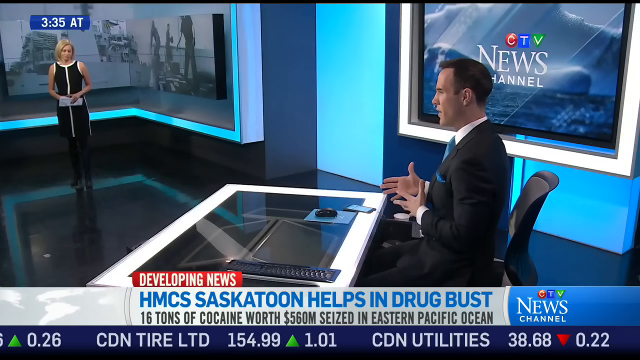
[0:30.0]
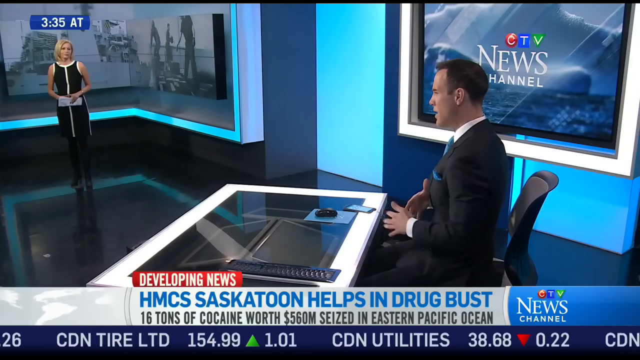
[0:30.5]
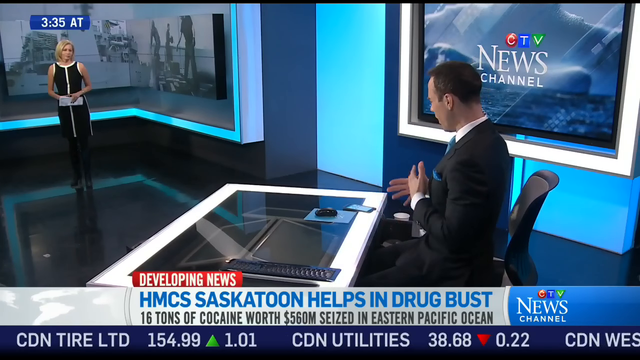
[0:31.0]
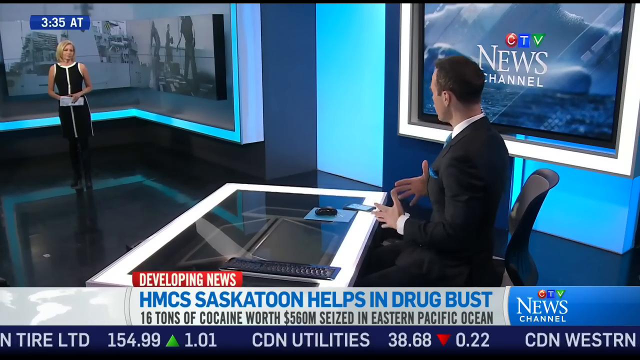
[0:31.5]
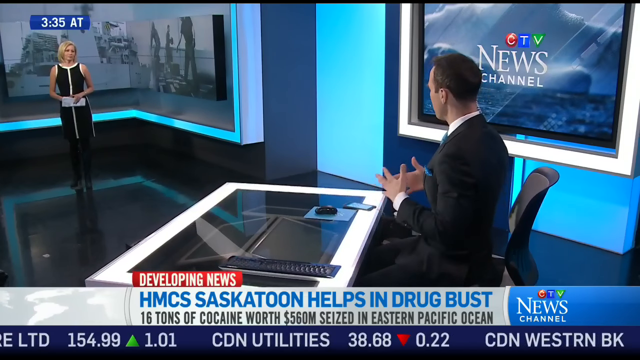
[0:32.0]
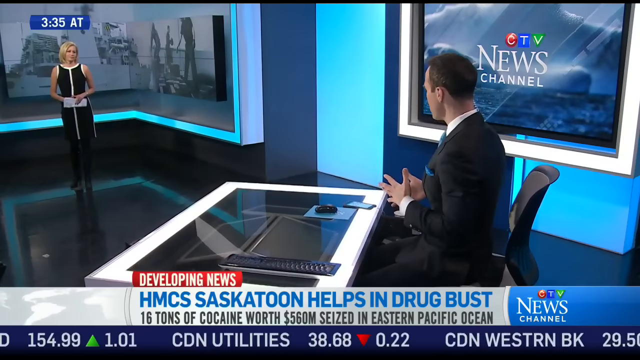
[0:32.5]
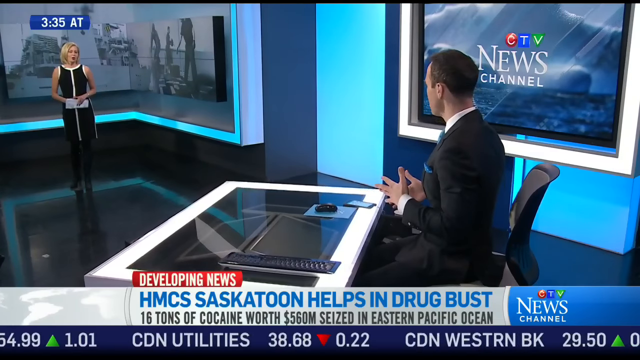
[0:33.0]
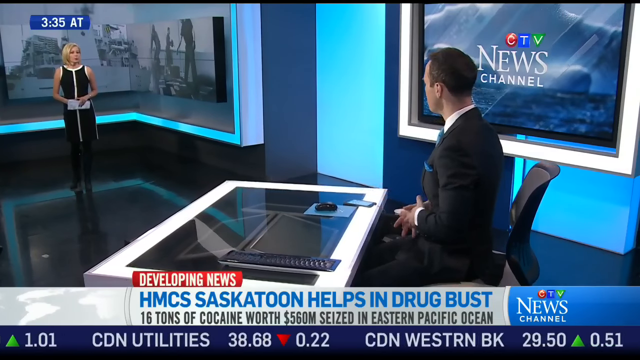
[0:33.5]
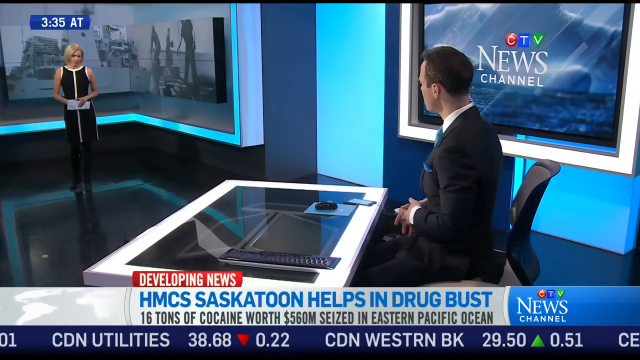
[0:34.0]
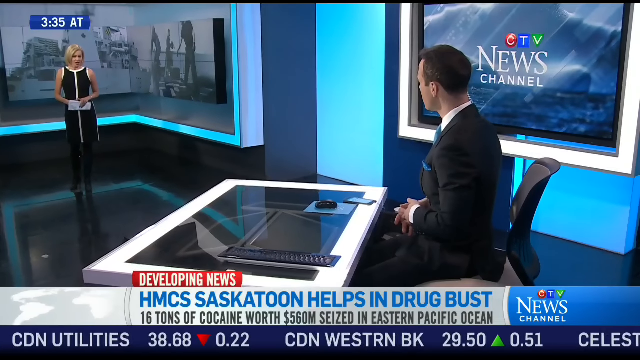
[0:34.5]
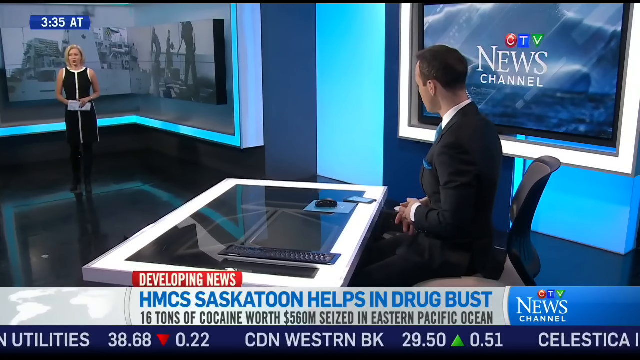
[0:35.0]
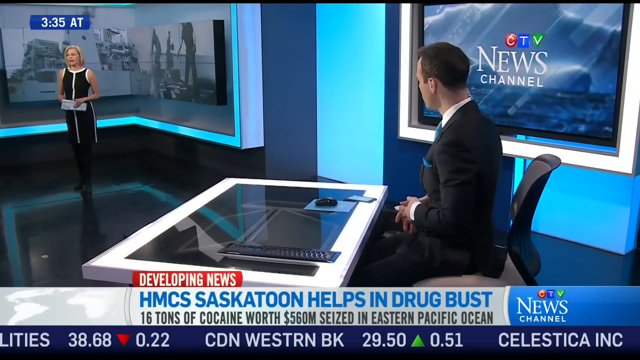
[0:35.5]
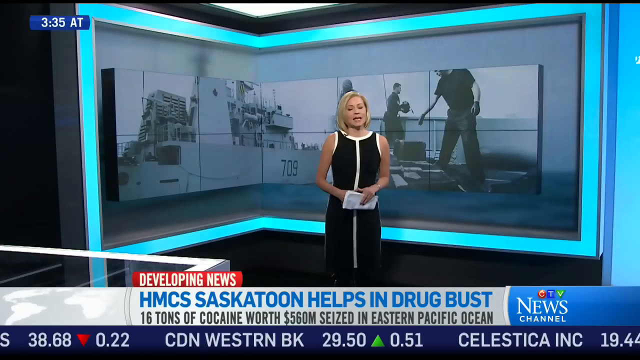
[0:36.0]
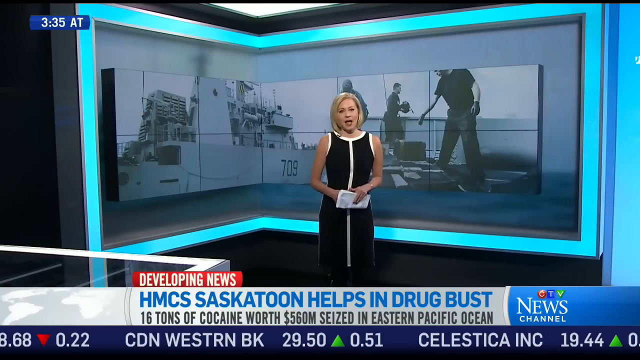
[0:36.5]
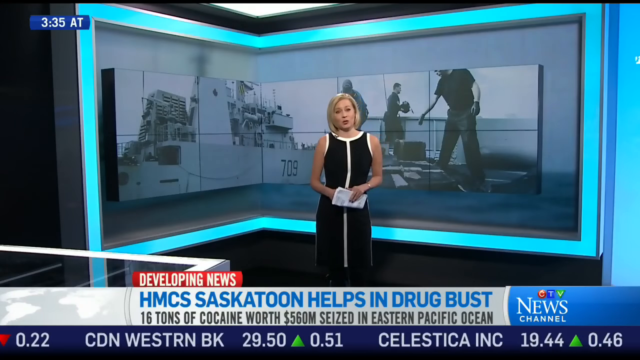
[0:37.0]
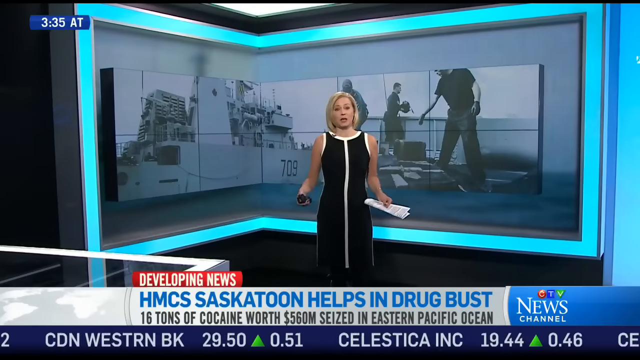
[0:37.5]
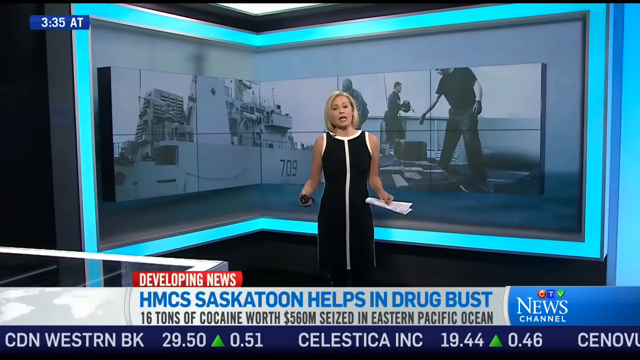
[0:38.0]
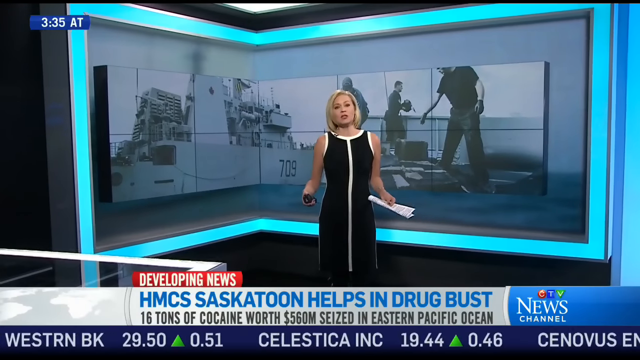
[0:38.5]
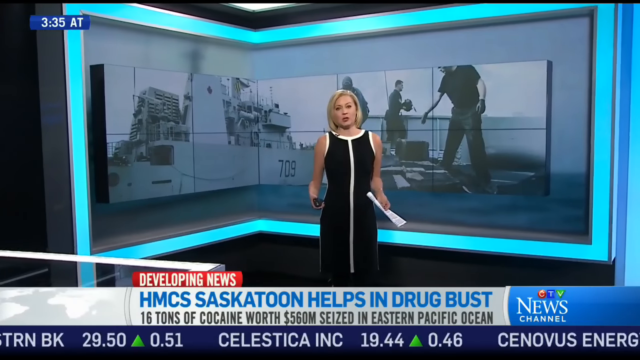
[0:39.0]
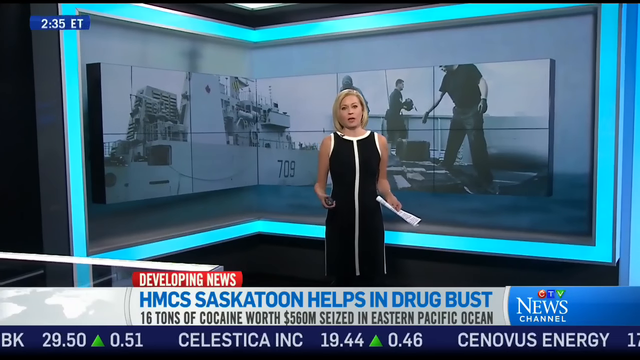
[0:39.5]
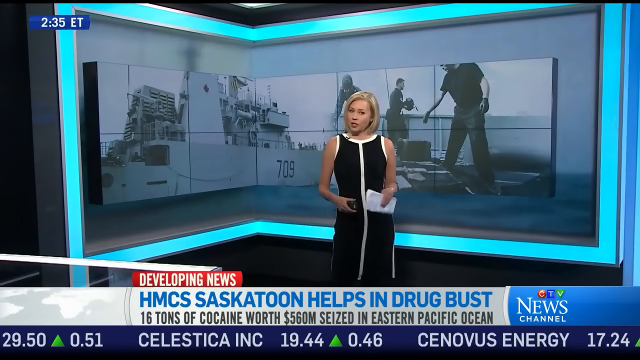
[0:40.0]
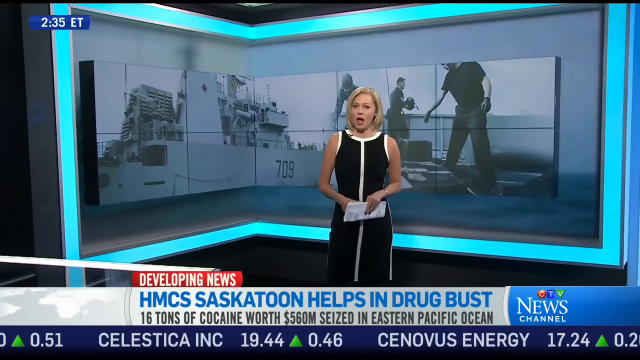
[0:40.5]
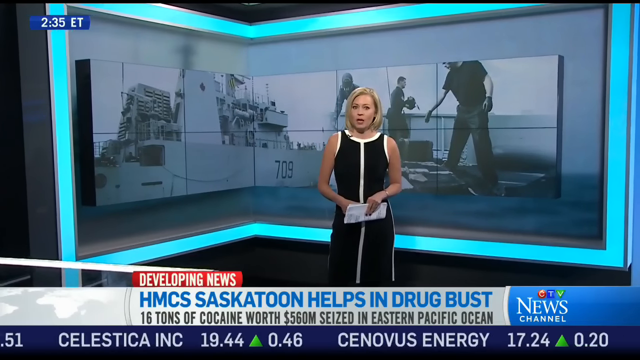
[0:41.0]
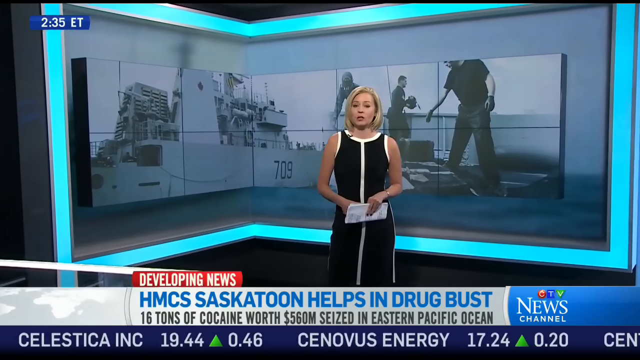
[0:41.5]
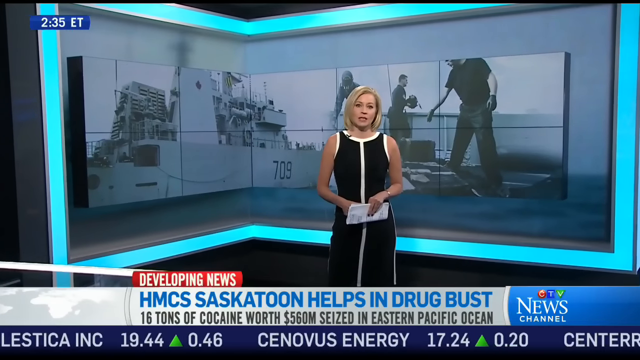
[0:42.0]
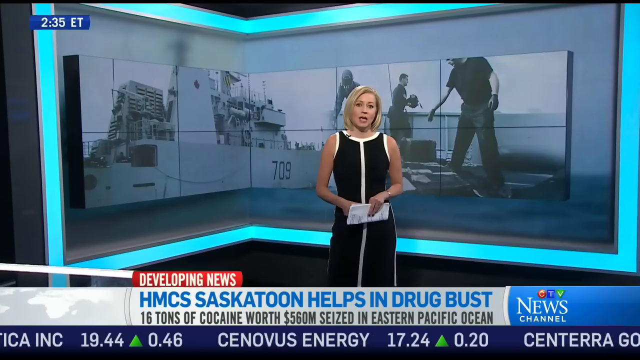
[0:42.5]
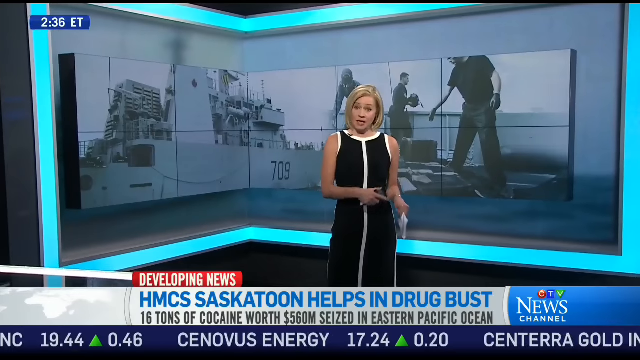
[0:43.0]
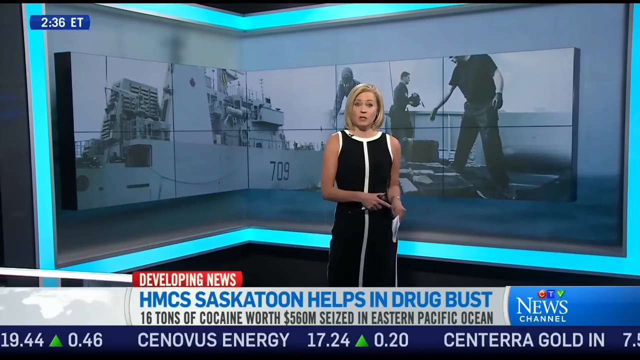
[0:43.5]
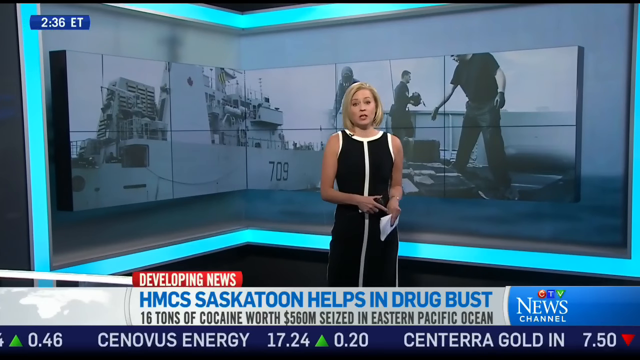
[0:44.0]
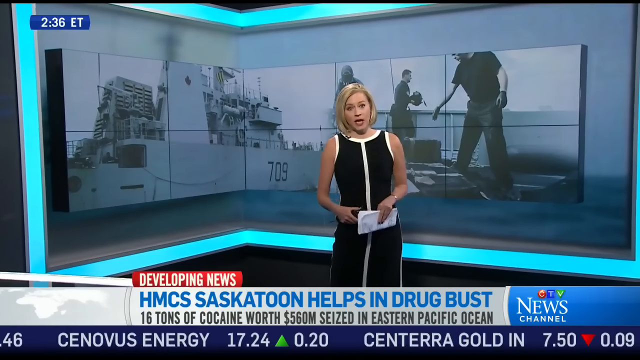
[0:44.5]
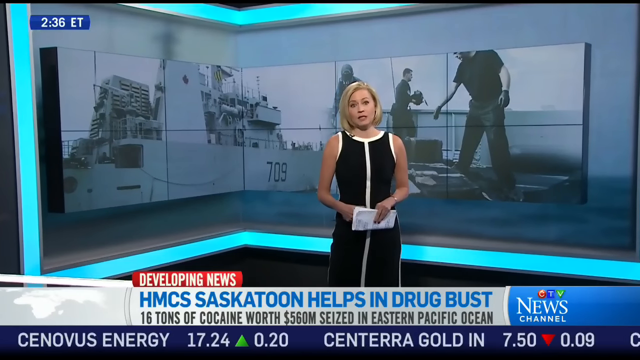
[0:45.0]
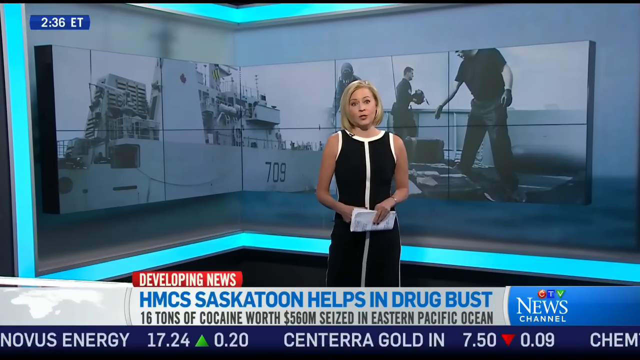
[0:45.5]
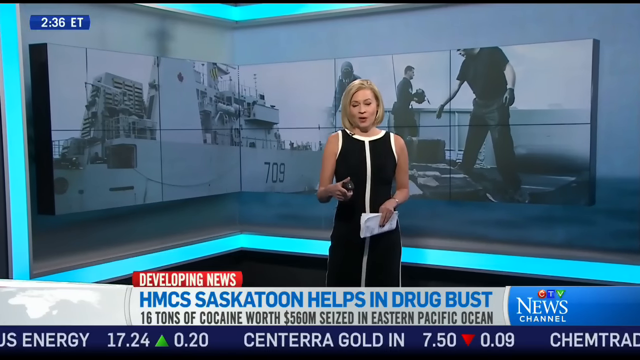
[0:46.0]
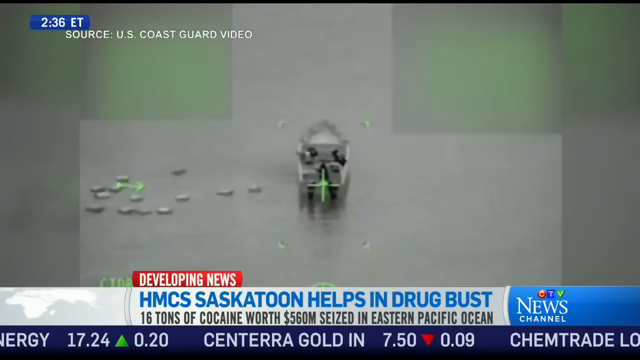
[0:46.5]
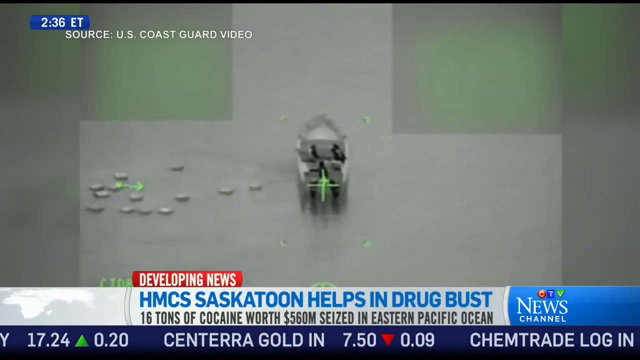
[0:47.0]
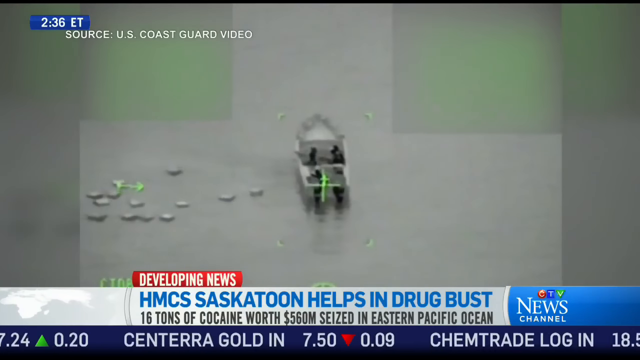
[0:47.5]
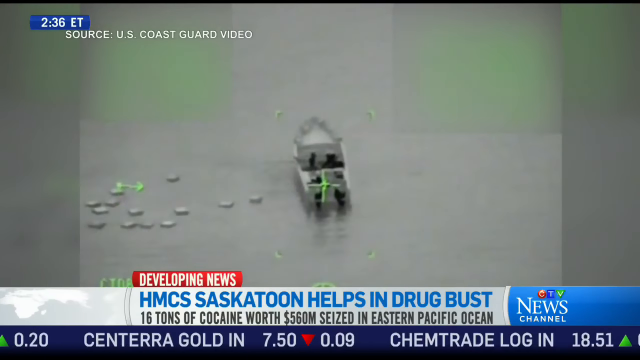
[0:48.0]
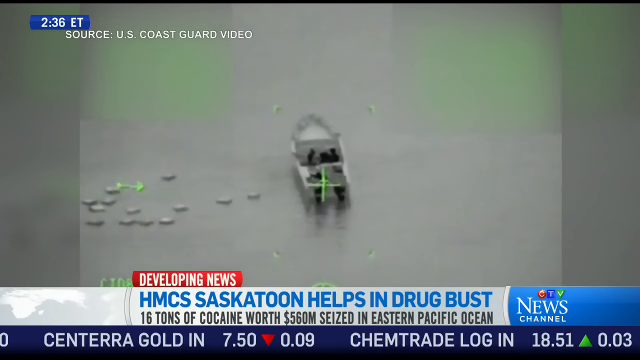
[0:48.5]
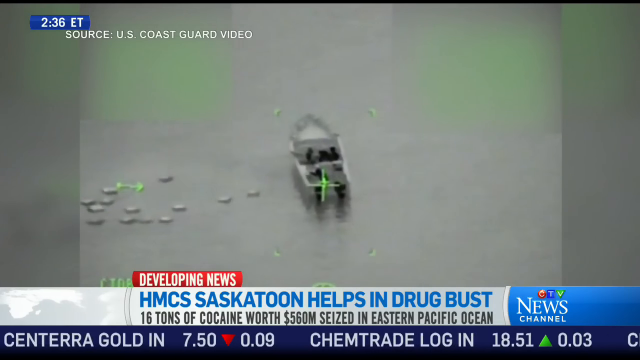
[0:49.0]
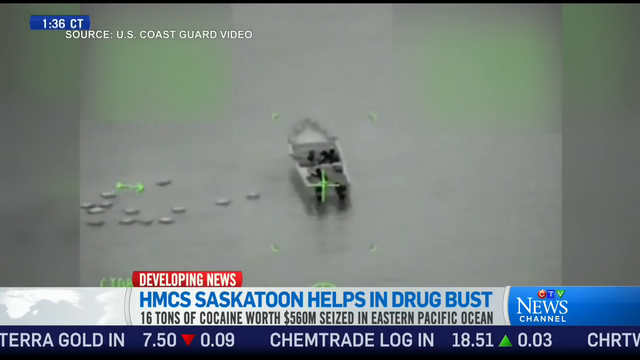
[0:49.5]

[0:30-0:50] Two news anchors are shown: one sitting at a desk and another in the distance. The man at the desk has brown hair and wears a black suit, a white shirt and a blue tie. The woman in the distance is blonde and wears a black dress with a white stripe in the middle and white around the collar and the arms. "CTV news channel" appears on one of the screens in the background, and the background is very blue. At the bottom, the developing news text reads "HMCS Saskatoon helps in drug bust, 16 tons of cocaine worth 560 million seized in Eastern Pacific Ocean." The anchor at the desk talks and moves his hands, talking to the other anchor across the room. The camera pans to her, and behind her is a picture and screens of men on a ship, the HMCS Saskatoon. The scene then changes to a camera up above, apparently above a body of water, looking down on a boat.